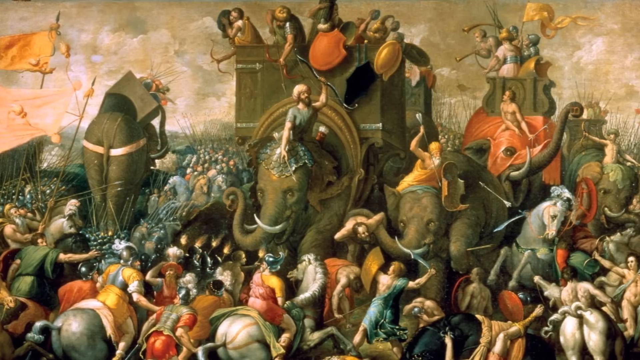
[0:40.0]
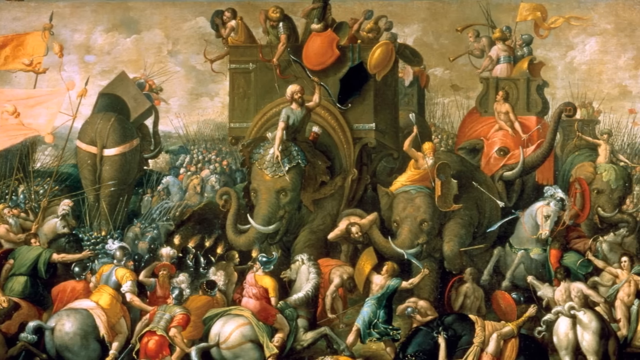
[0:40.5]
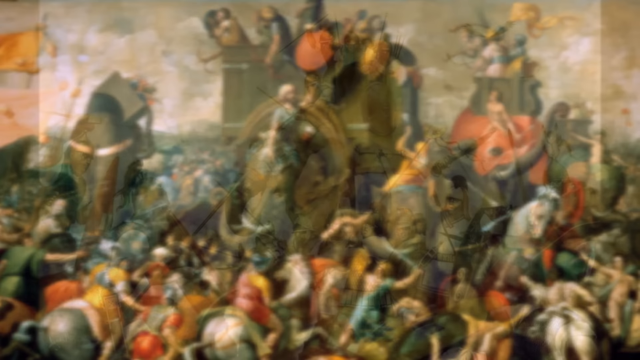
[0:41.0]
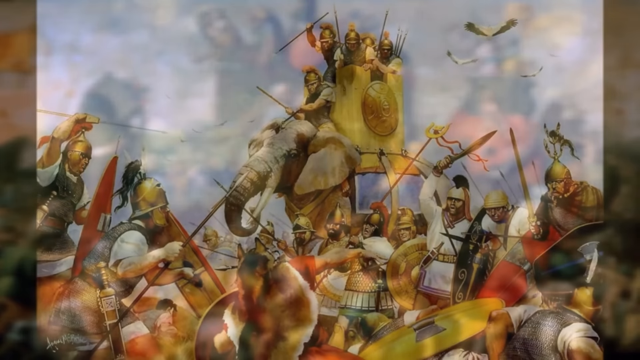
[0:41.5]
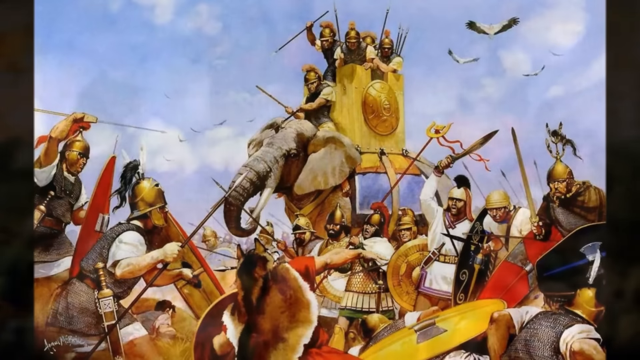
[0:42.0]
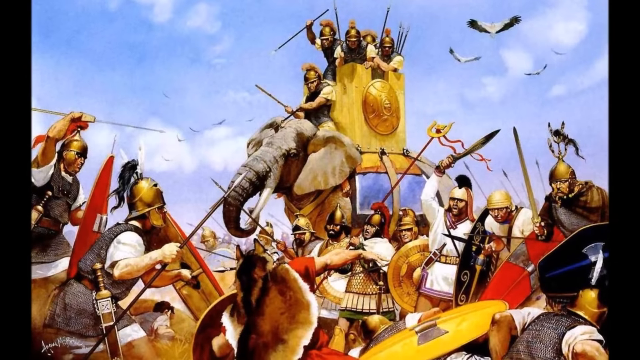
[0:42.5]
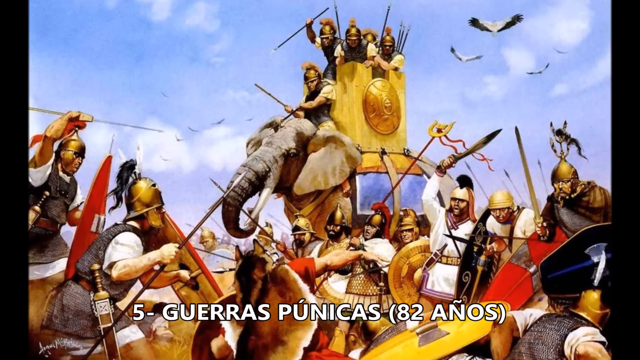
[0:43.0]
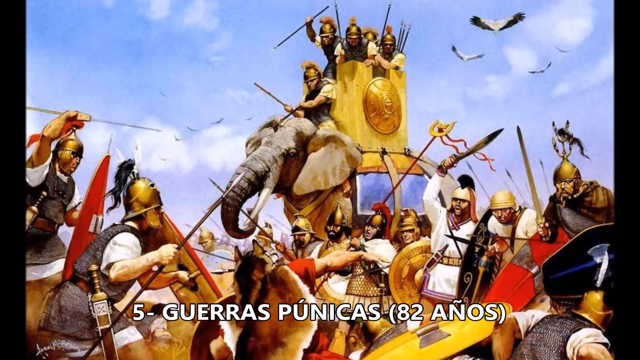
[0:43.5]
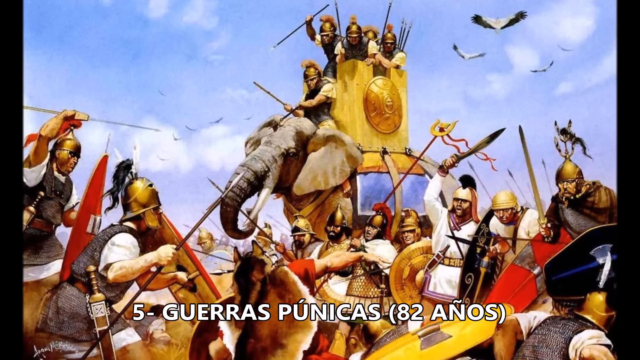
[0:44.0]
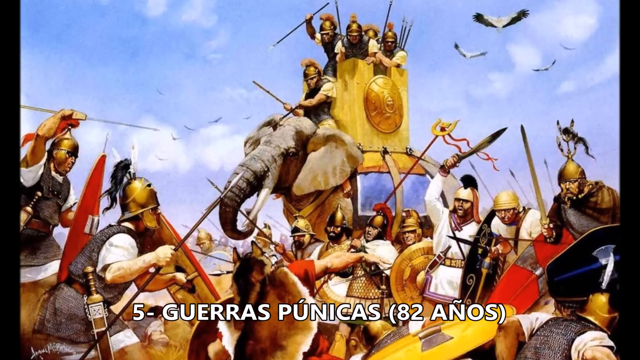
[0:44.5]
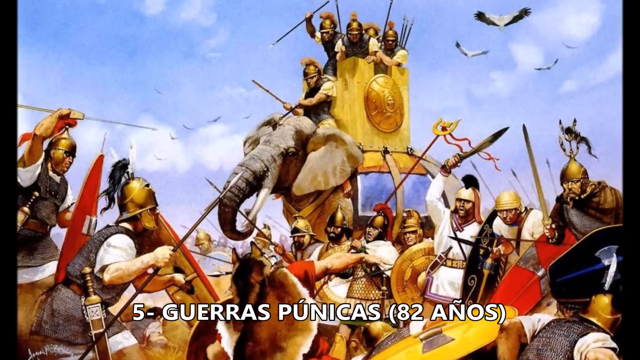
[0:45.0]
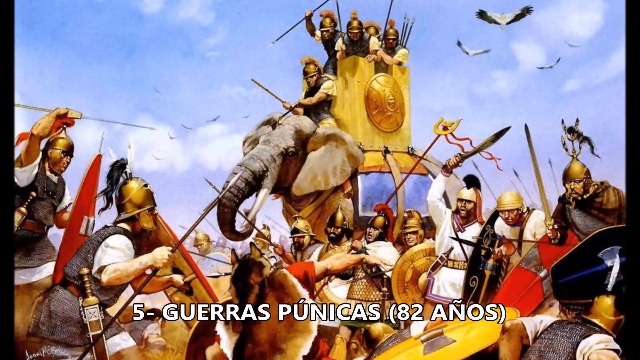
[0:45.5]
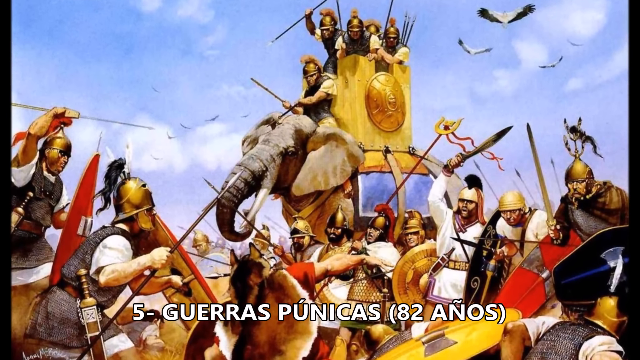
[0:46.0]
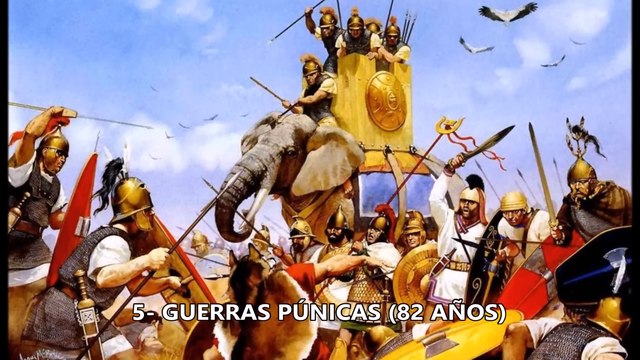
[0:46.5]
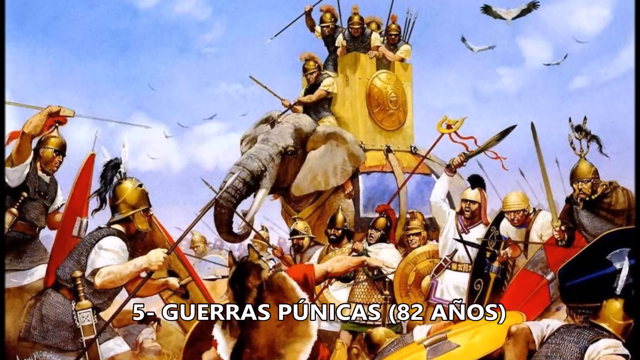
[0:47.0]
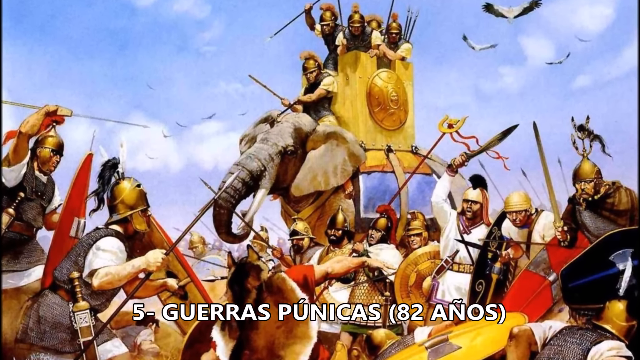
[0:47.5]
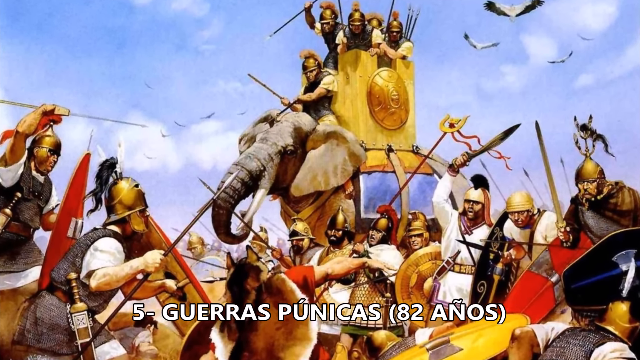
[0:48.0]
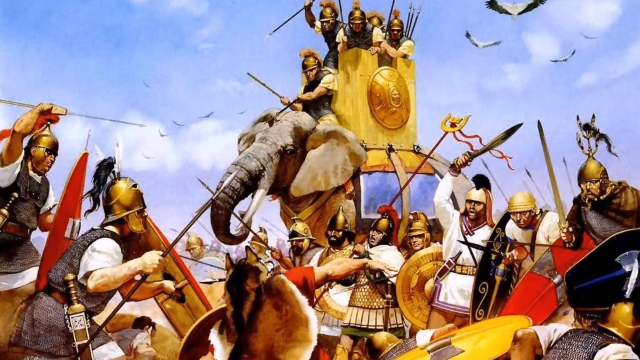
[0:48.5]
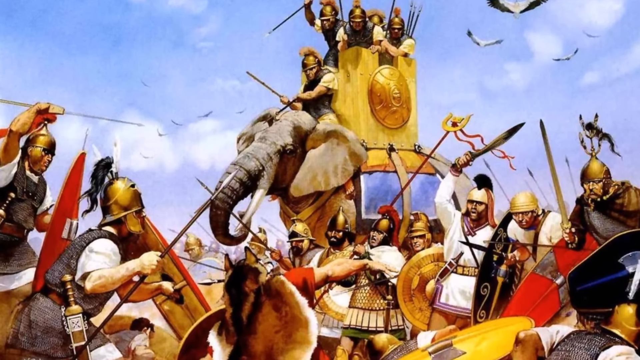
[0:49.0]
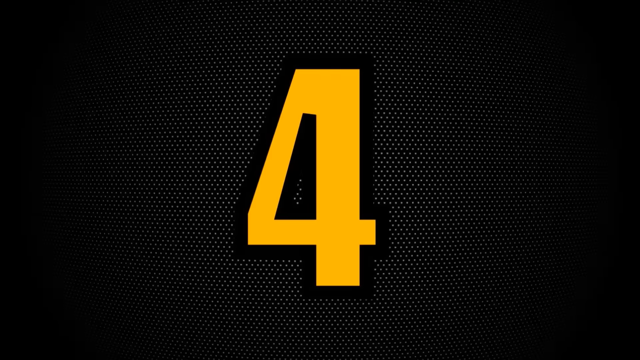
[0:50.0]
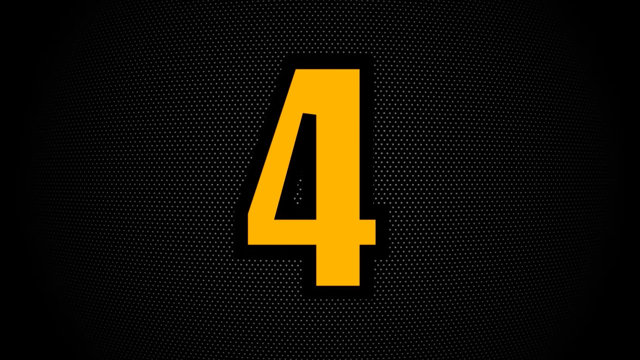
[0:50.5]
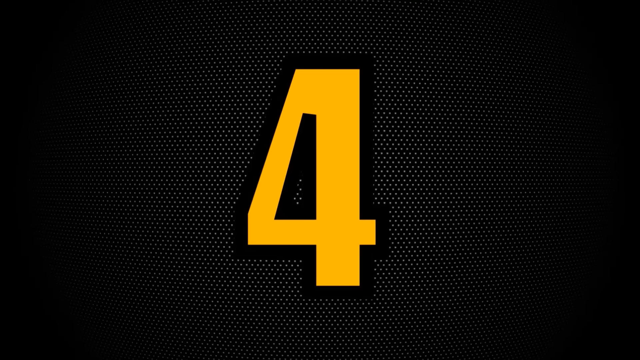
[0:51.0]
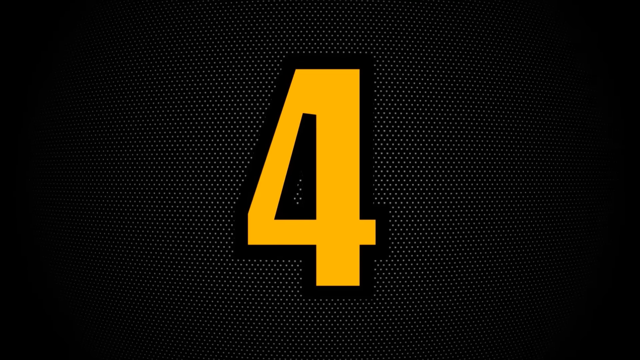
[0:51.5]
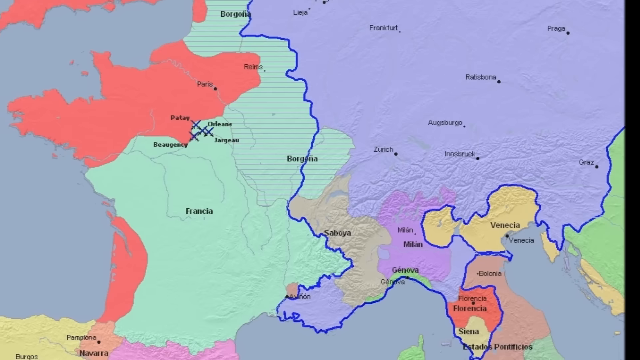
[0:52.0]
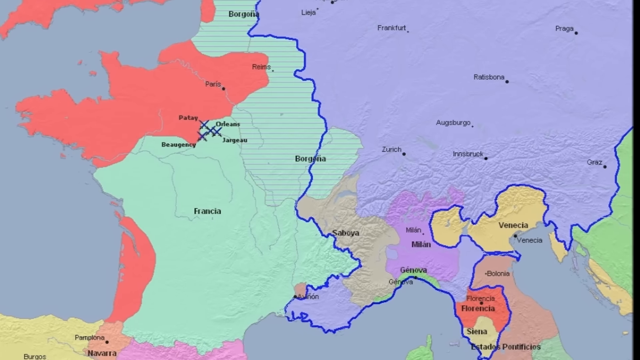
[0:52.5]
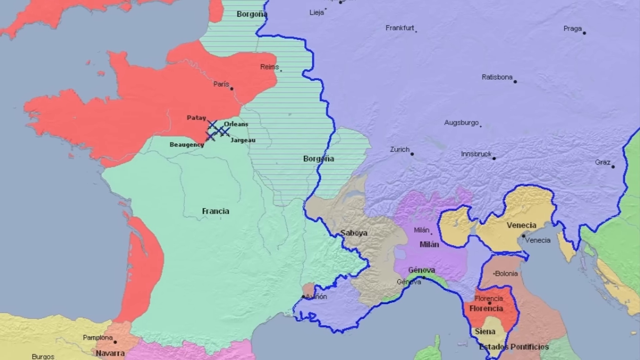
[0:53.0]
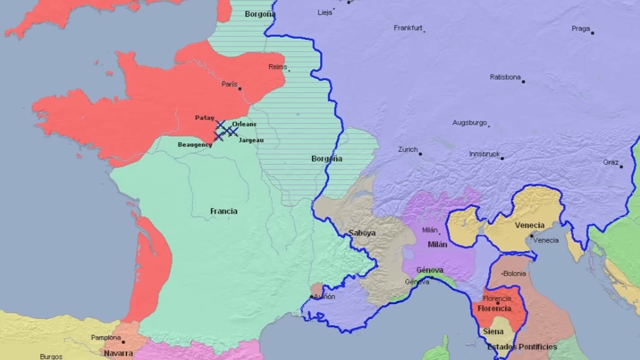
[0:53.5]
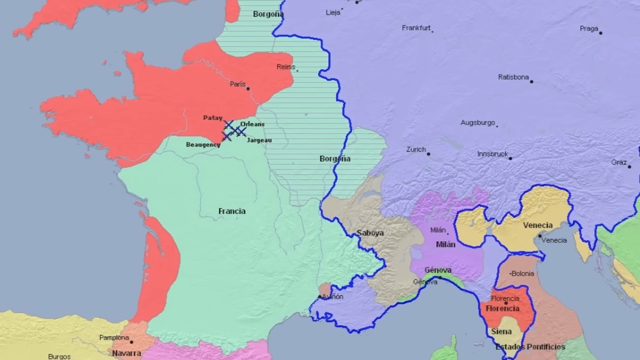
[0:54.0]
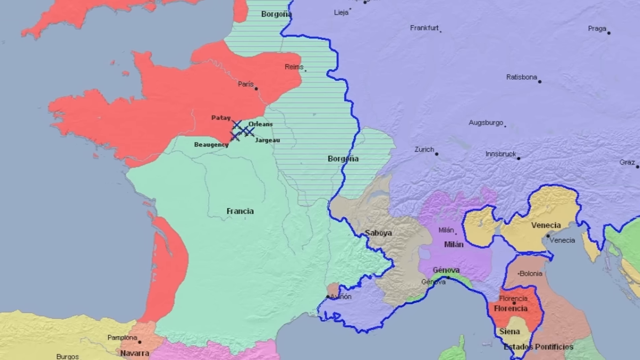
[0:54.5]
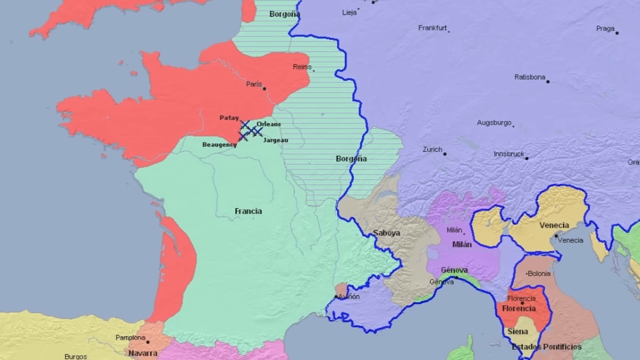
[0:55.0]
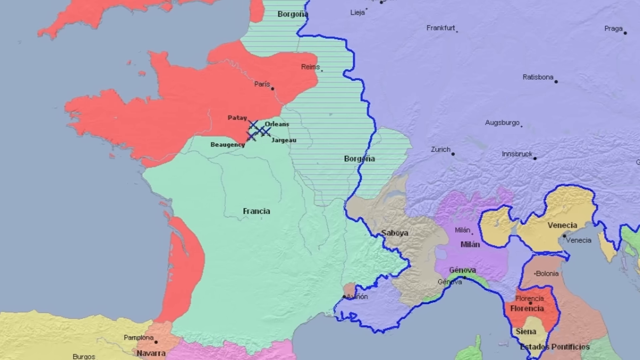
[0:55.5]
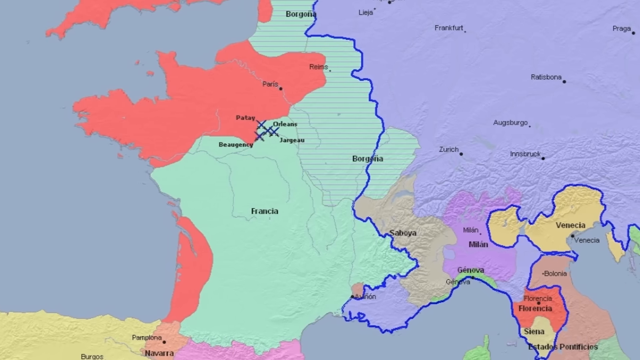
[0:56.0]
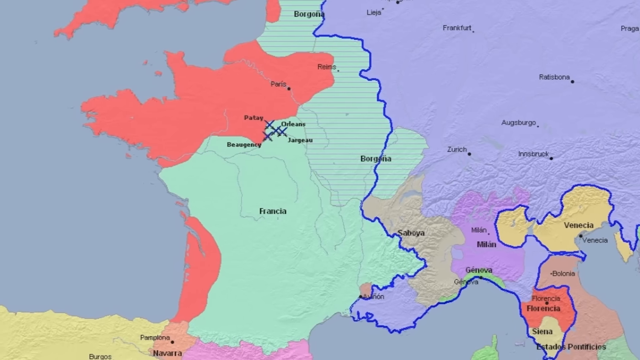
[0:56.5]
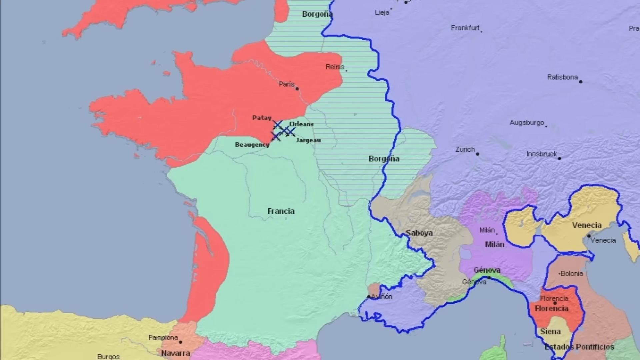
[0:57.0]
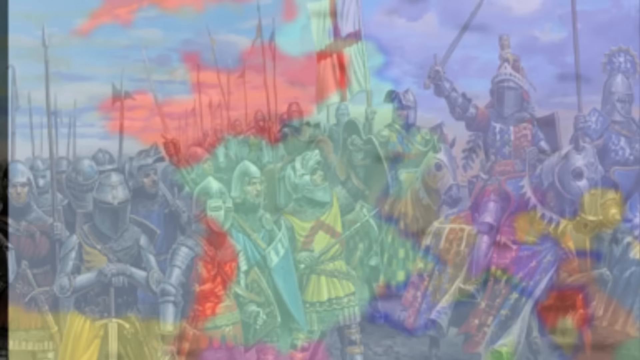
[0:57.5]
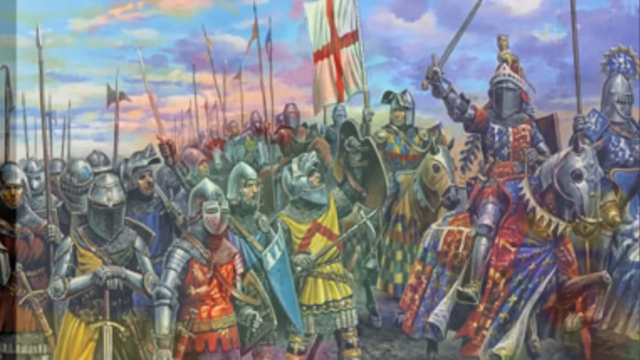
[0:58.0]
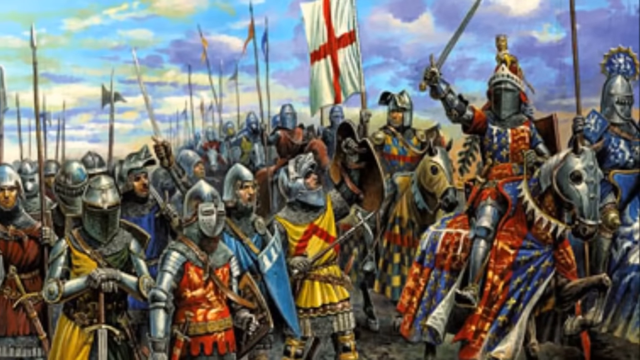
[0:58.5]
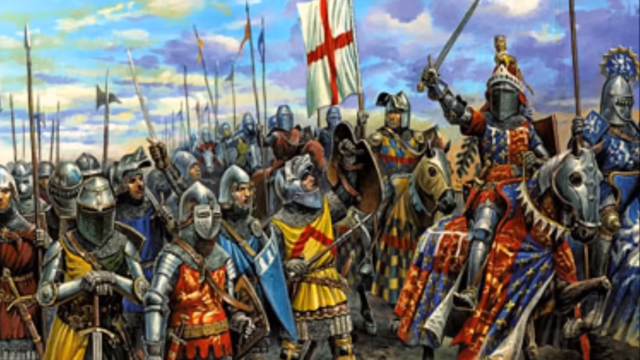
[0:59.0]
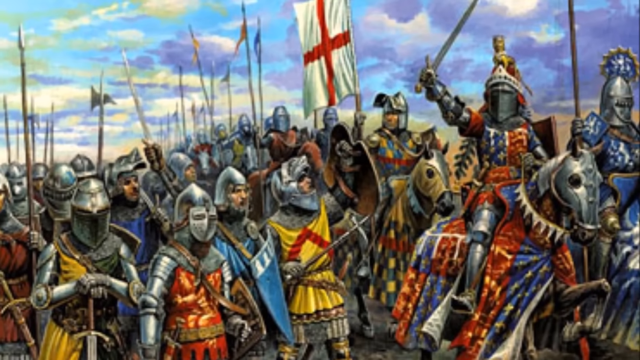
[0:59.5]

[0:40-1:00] The fourth war in the countdown is the war between England and France. A map of France shows the English territories in pink and the French territories in green, with the Duchy of Burgundy in eastern and northeast France also identified.